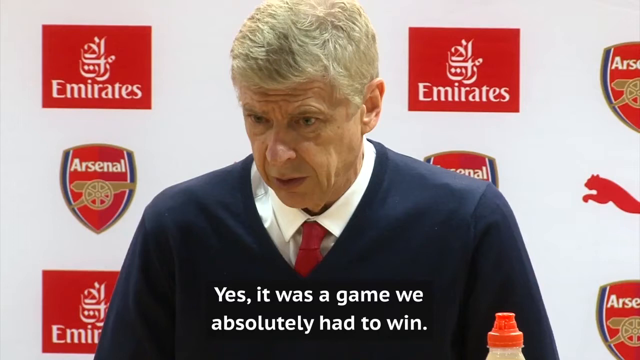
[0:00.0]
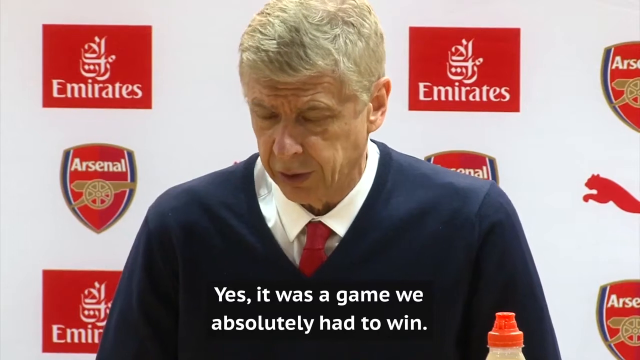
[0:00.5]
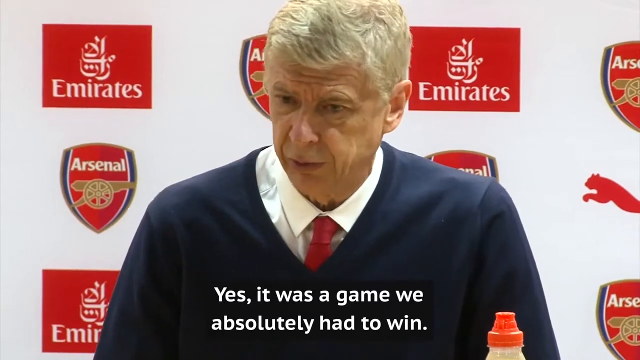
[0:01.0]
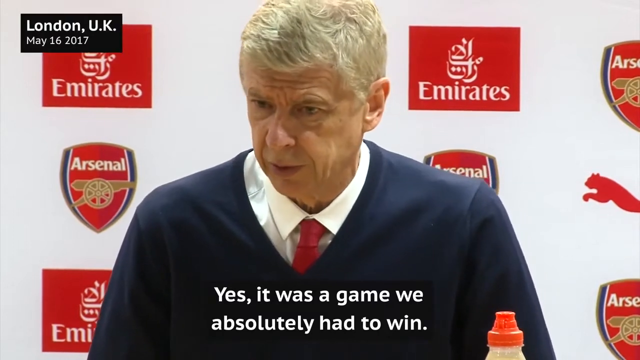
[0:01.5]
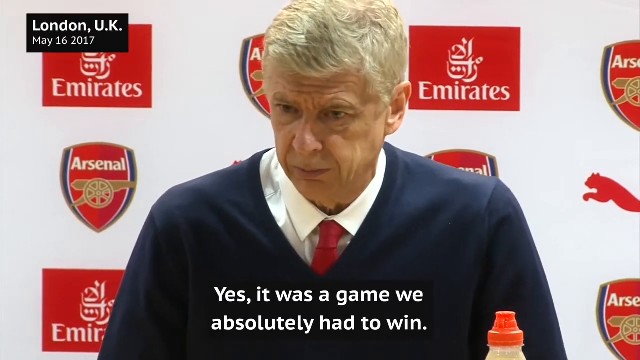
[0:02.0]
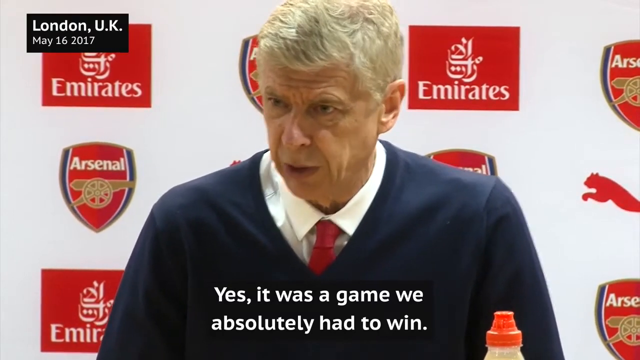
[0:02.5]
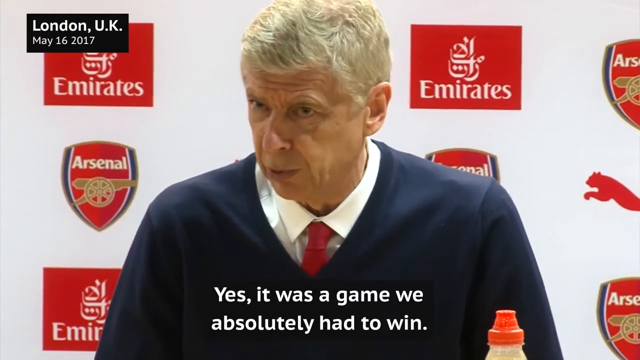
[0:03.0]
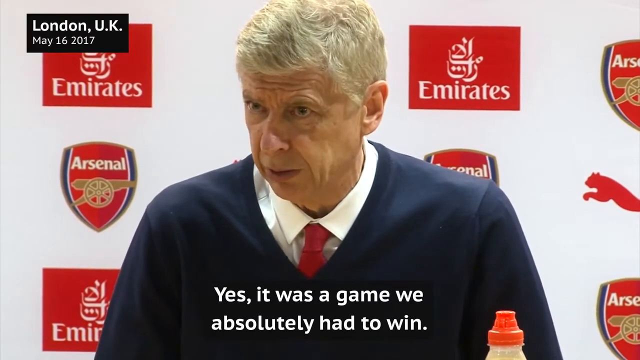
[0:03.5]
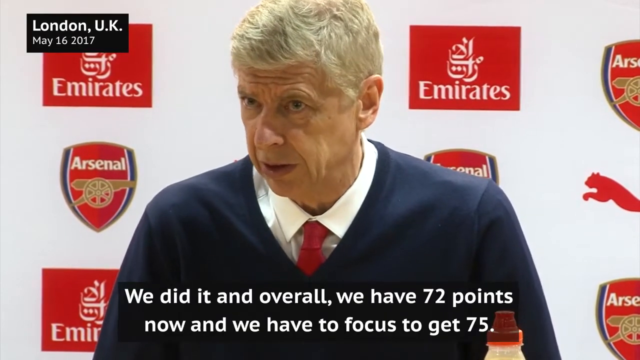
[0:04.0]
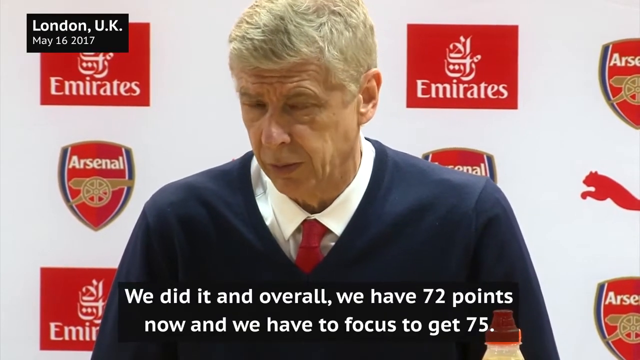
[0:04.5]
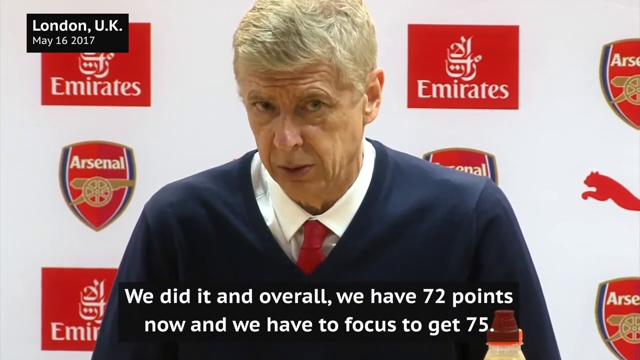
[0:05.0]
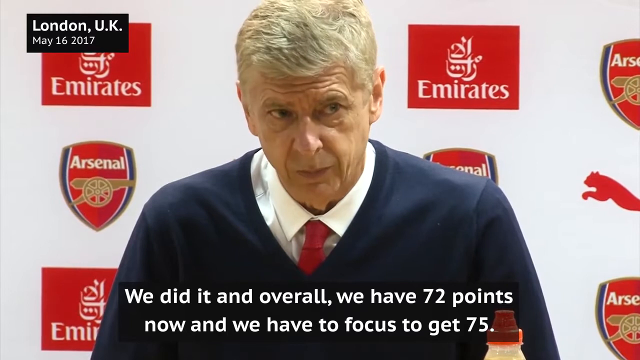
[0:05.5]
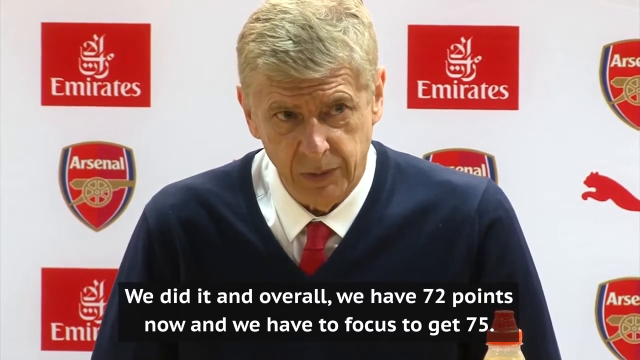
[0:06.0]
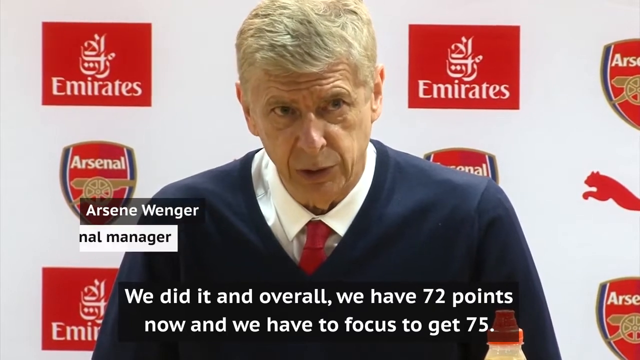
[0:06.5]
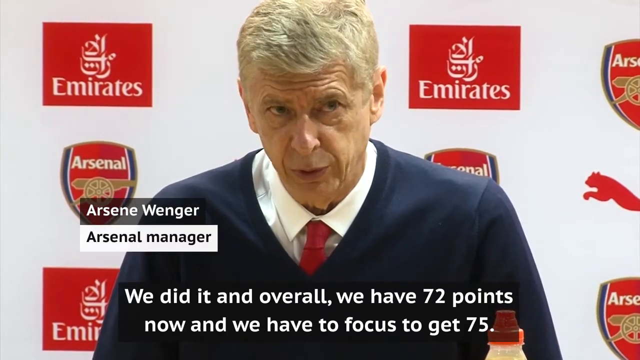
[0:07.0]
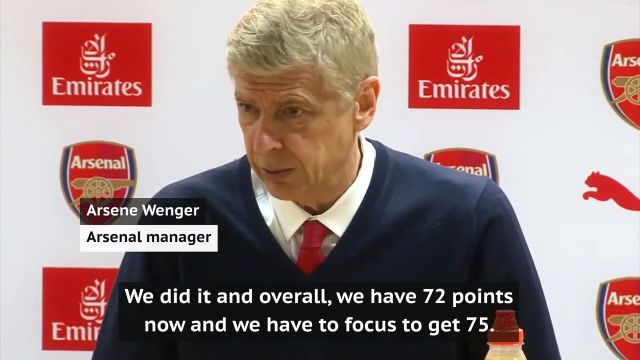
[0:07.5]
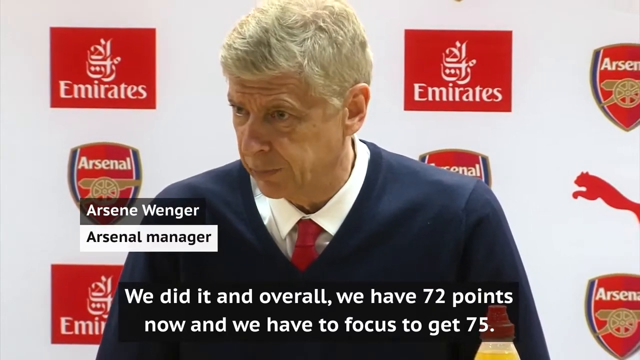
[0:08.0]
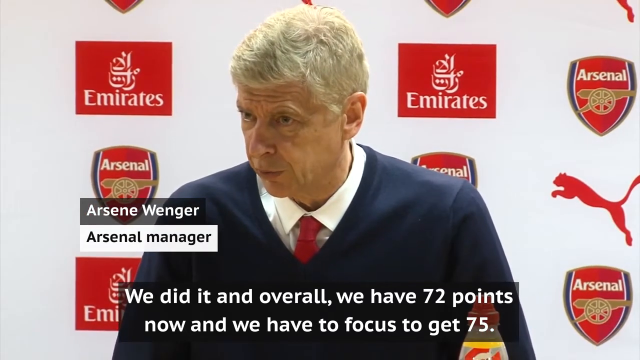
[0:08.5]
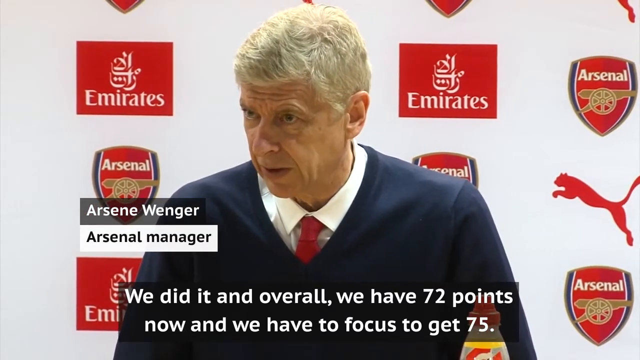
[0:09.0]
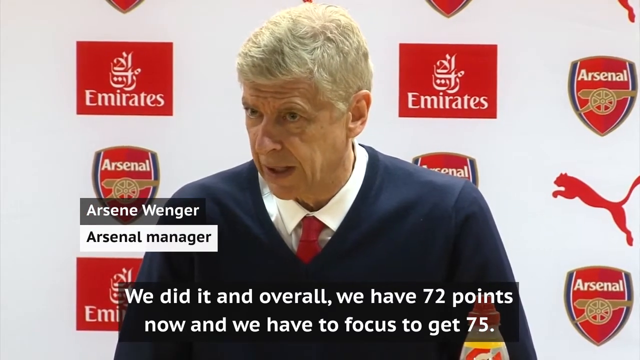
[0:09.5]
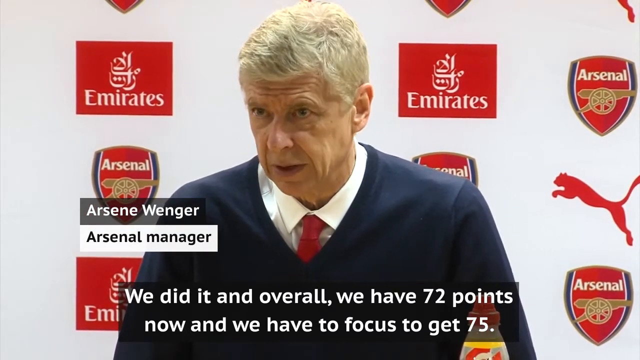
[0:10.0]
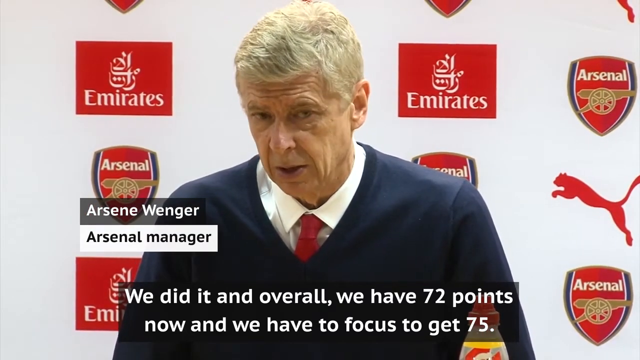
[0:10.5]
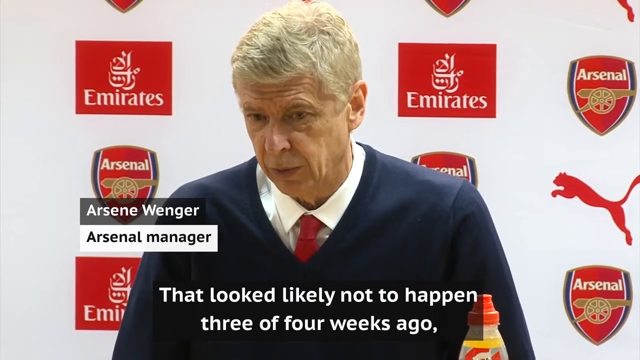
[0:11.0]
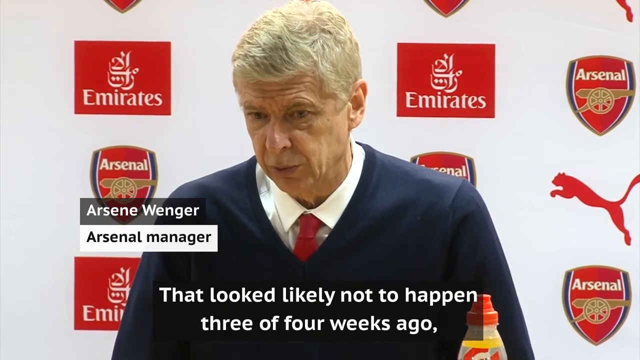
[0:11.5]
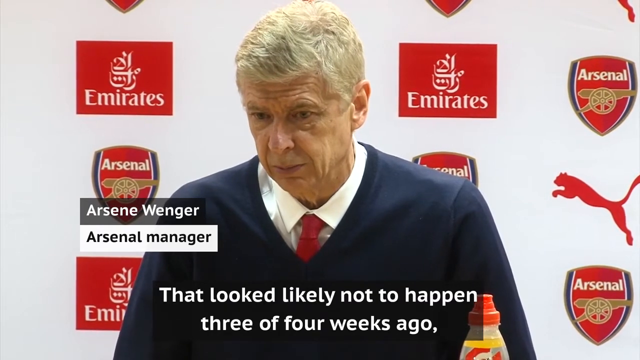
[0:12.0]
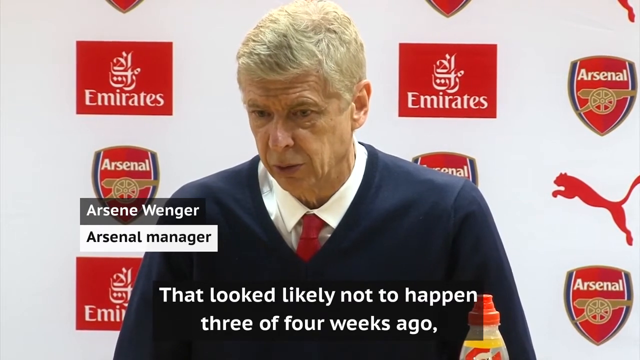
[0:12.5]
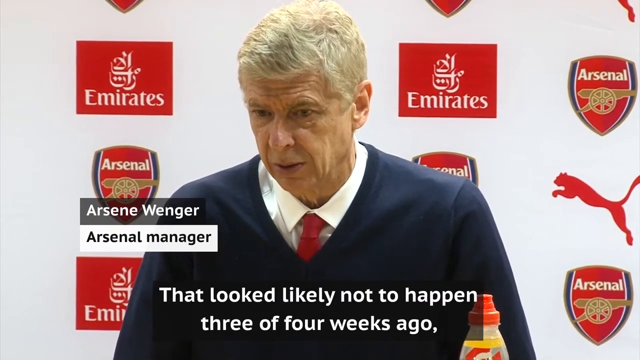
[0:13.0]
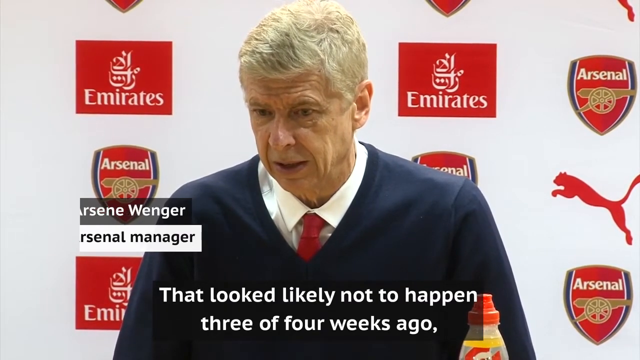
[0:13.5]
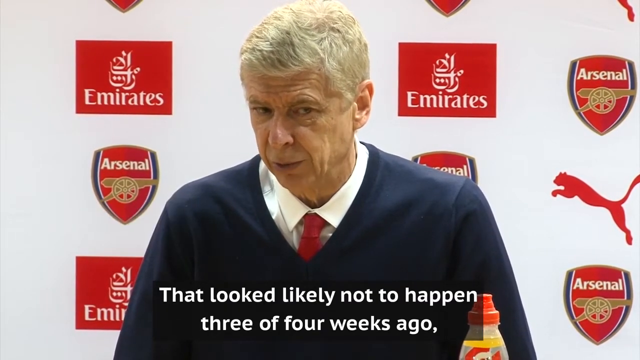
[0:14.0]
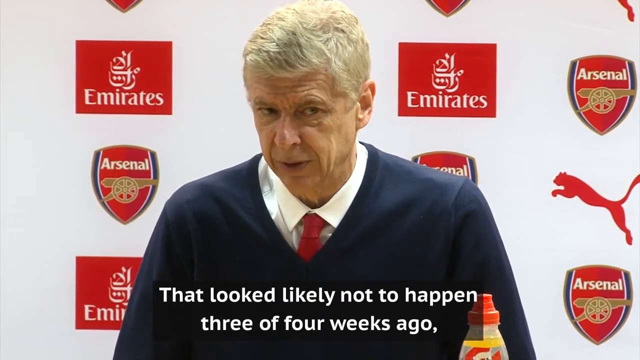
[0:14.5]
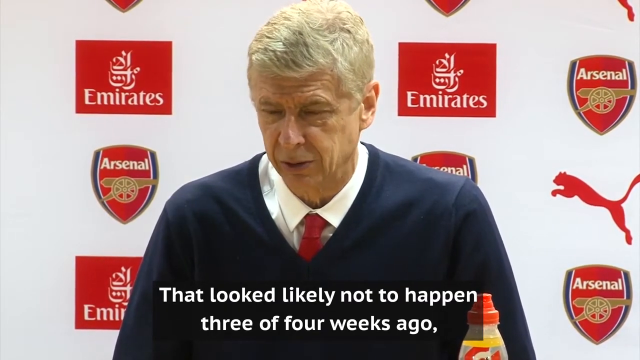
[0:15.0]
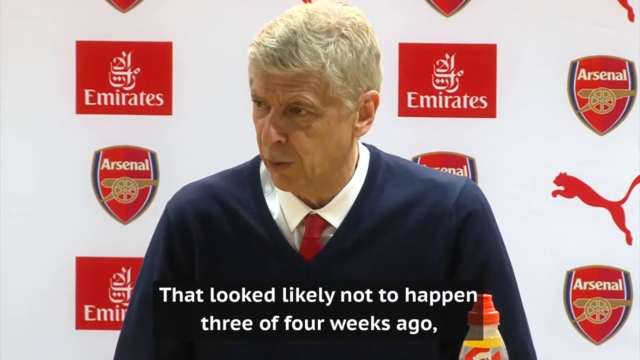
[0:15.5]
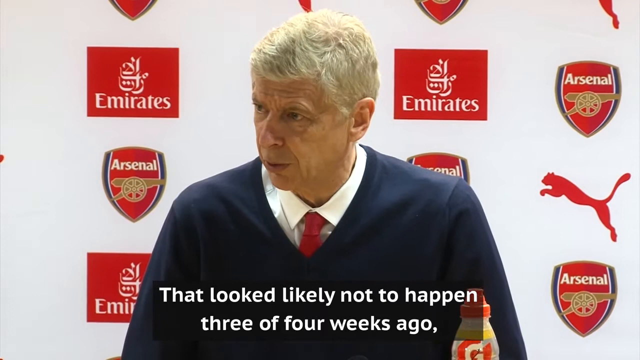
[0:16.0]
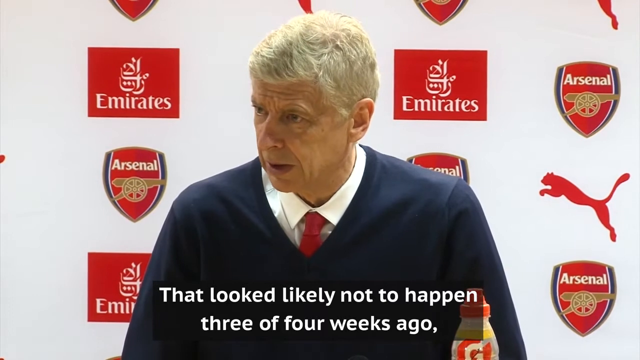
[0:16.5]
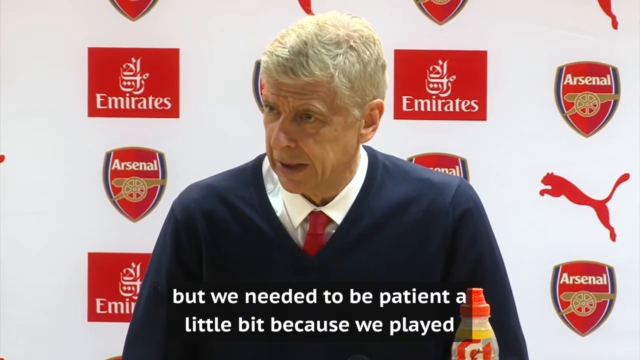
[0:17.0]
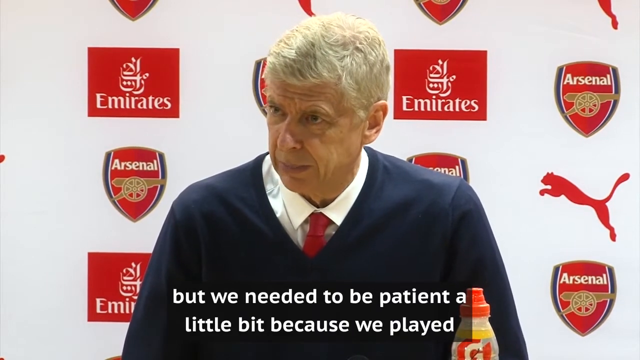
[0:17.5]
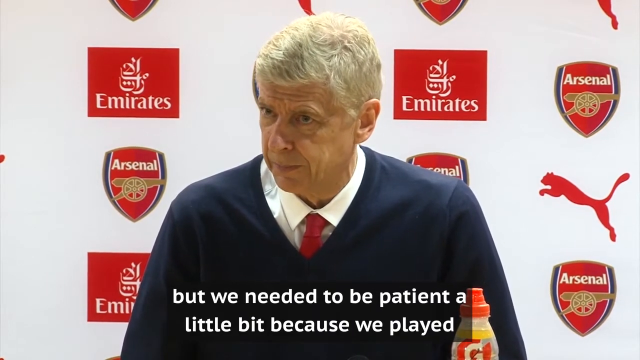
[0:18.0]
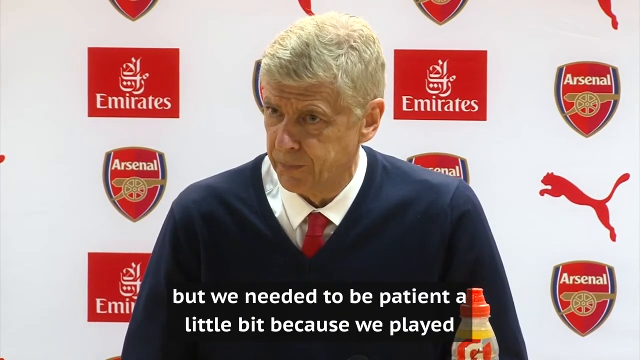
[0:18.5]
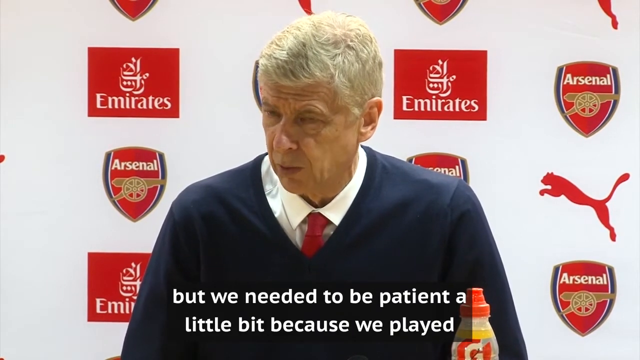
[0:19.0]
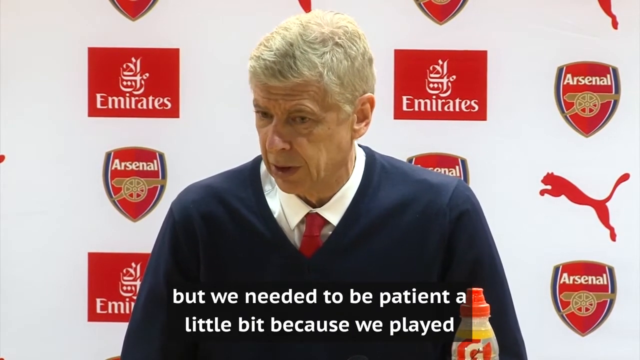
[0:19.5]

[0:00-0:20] An interview takes place in London, United Kingdom, on May 16, 2017. Arsenal's management is conducting the interview, with logos including the Arsenal logo, the Puma logo and Emirates in the background. Subtitles read "yes, it was a game we absolutely had to win." The manager appears to be wearing a blue sweater with a white collared shirt and a red tie. He has very thin hair, and wrinkles are visible all over his face as he looks very serious and stern. As he continues, he says, "we did it, and overall we had 70 points. Now we have to focus to get to 75." He is identified as Arsene Wenger, Arsenal manager. The logos in the back appear to be all red, including Arsenal, Puma and Emirates. The Arsenal logo also has a cannon in gold, and white text reading "Arsenal," with a blue layering outside the crest.